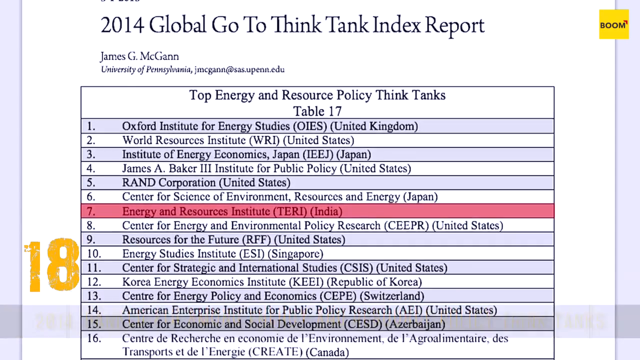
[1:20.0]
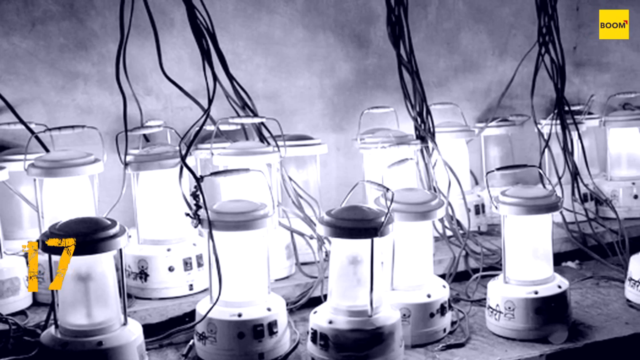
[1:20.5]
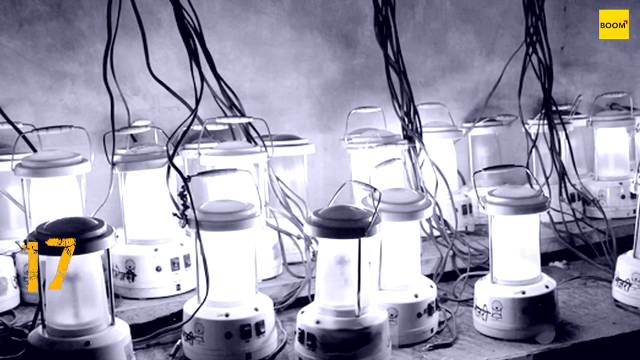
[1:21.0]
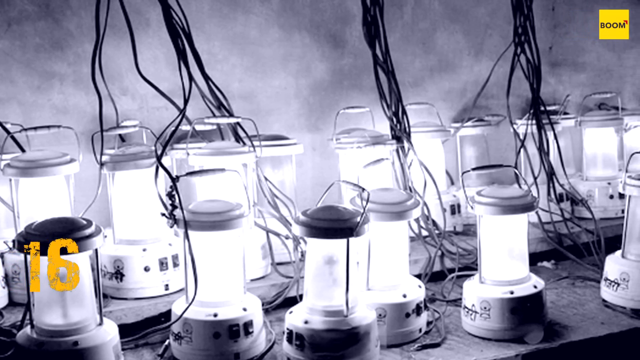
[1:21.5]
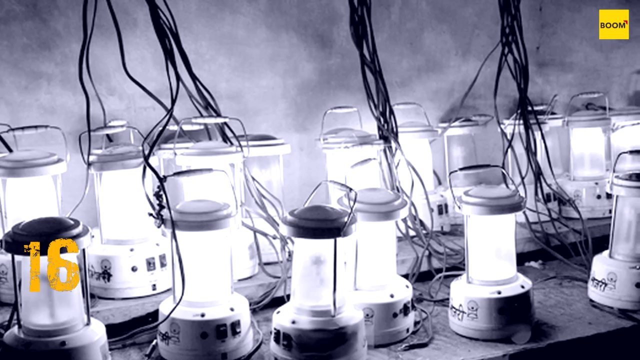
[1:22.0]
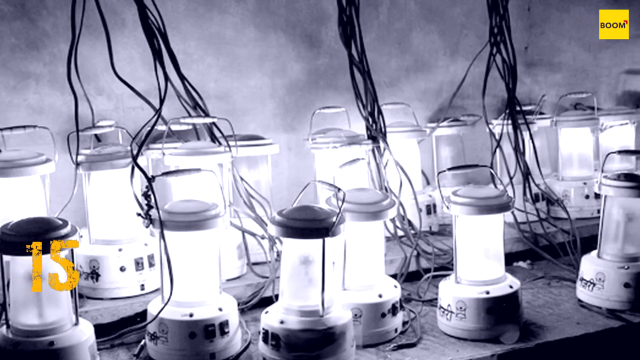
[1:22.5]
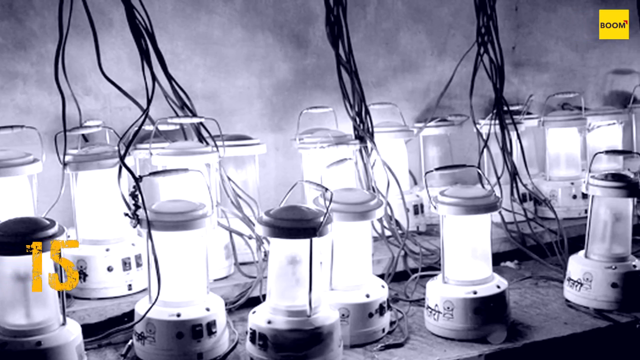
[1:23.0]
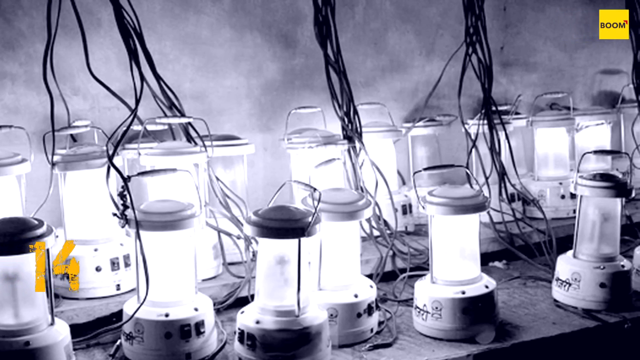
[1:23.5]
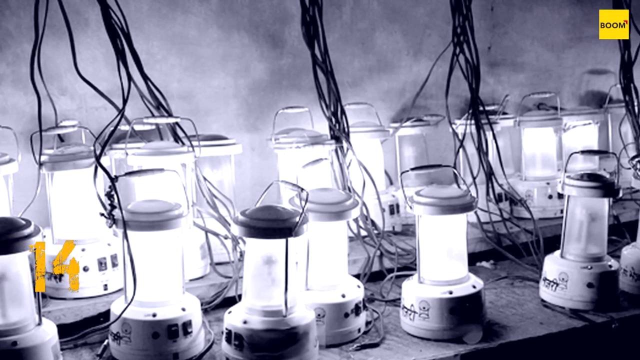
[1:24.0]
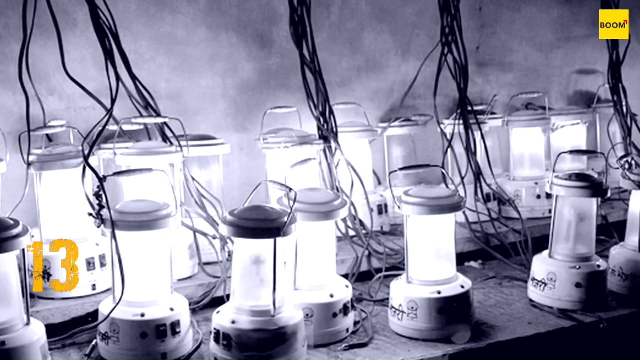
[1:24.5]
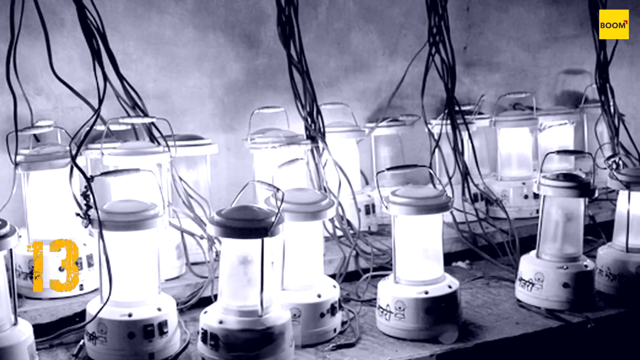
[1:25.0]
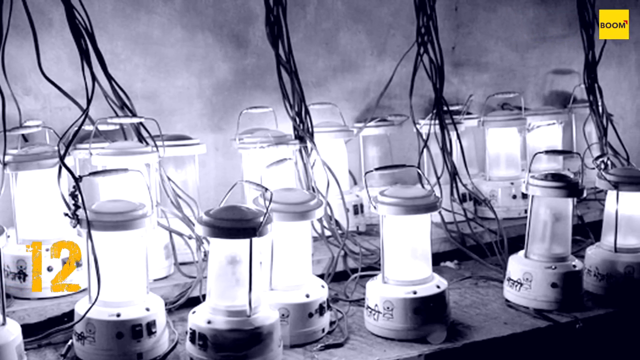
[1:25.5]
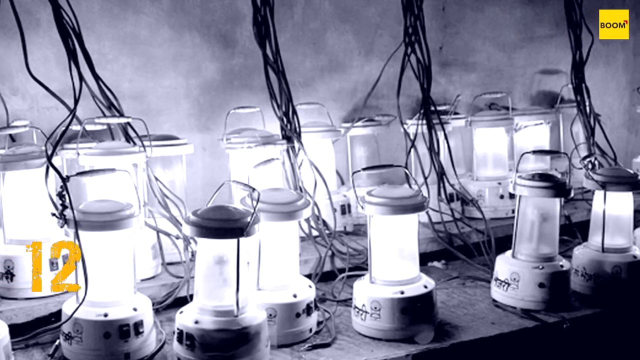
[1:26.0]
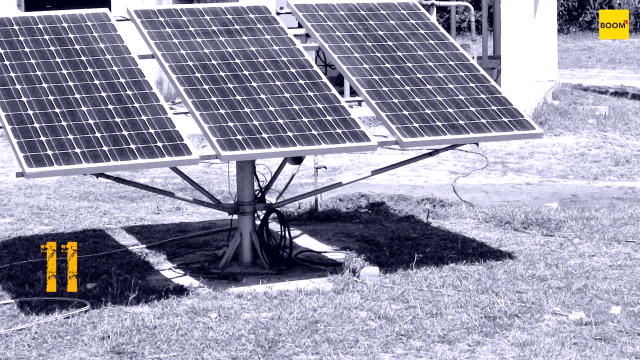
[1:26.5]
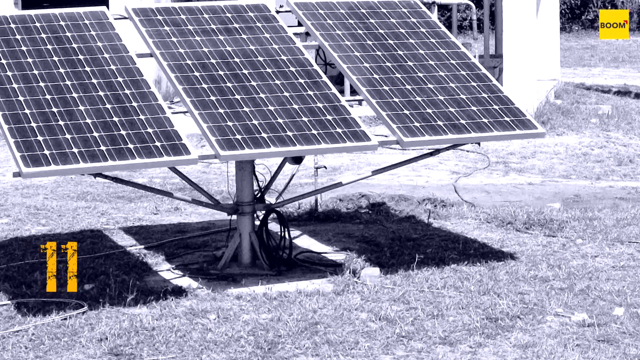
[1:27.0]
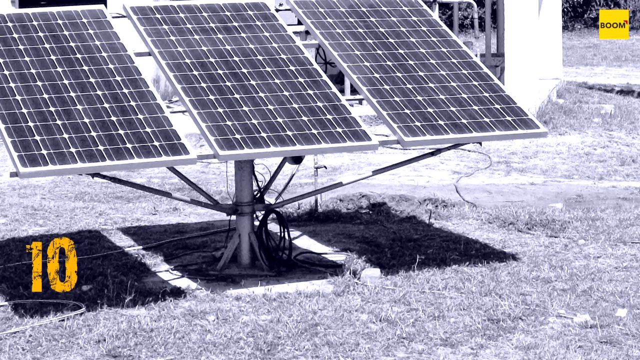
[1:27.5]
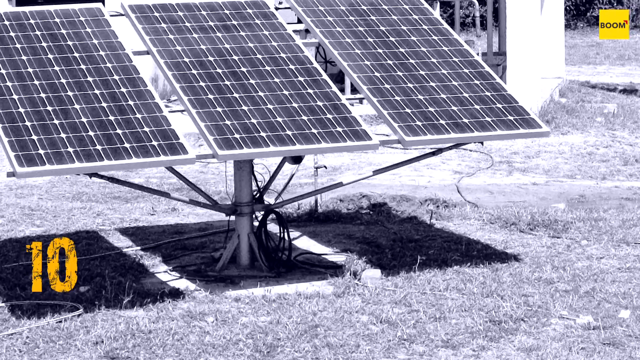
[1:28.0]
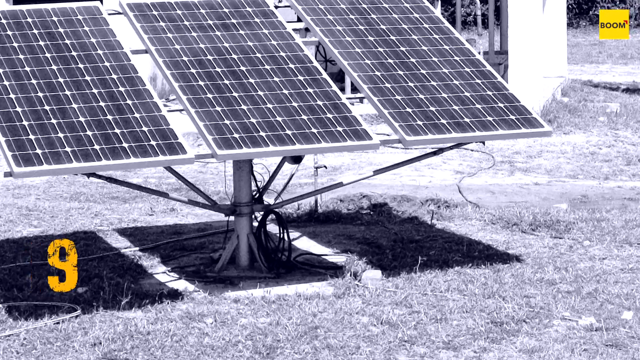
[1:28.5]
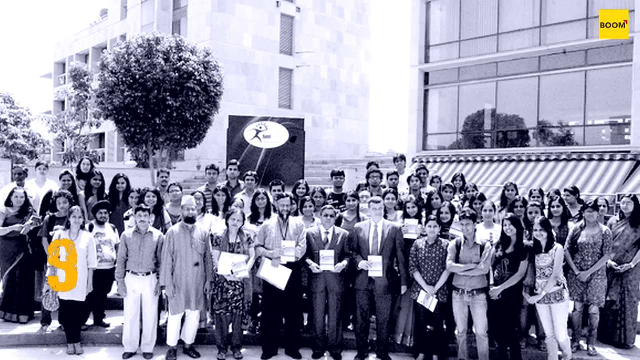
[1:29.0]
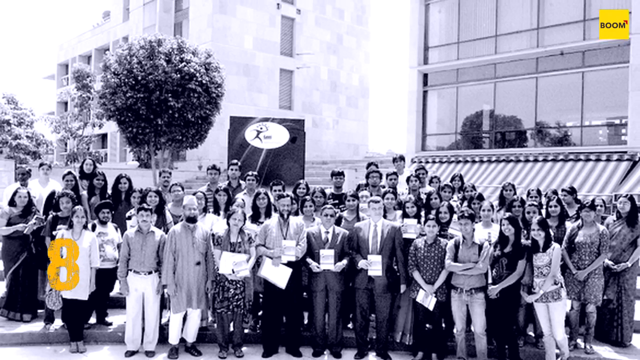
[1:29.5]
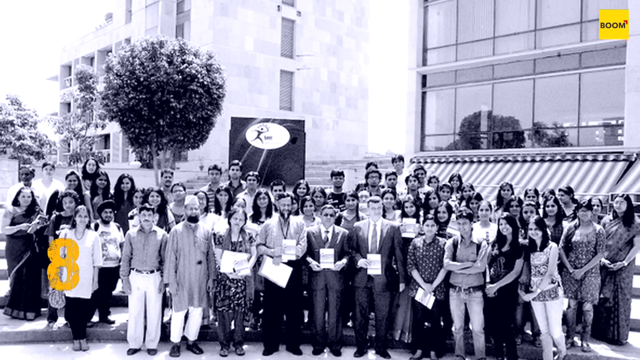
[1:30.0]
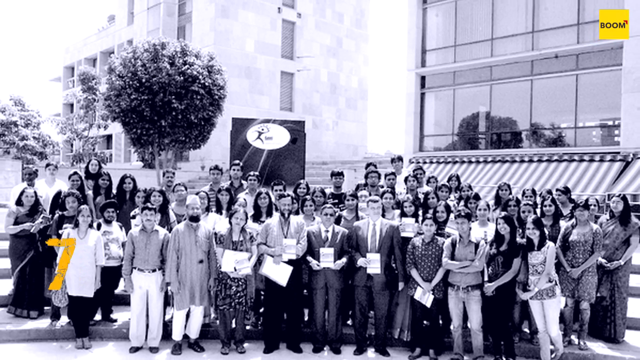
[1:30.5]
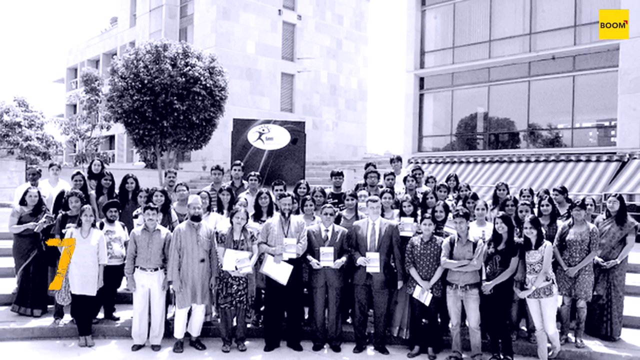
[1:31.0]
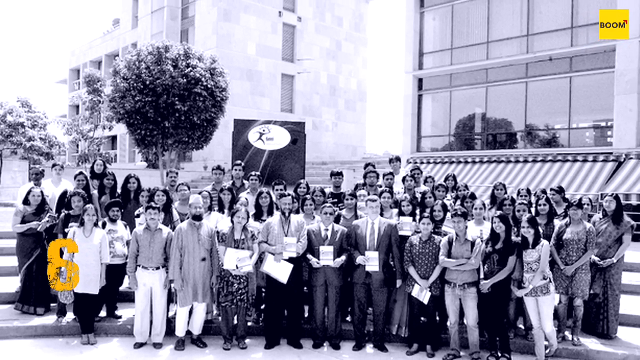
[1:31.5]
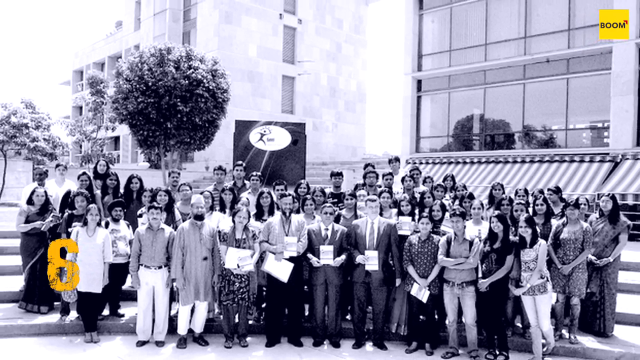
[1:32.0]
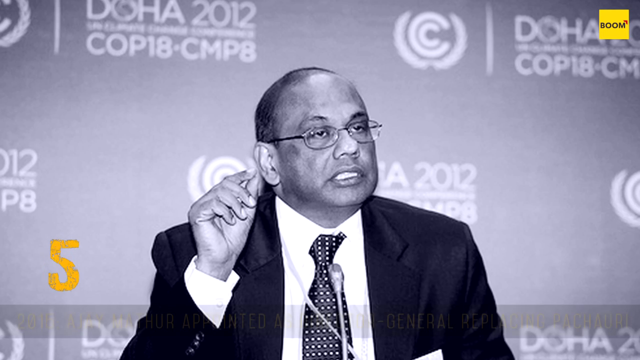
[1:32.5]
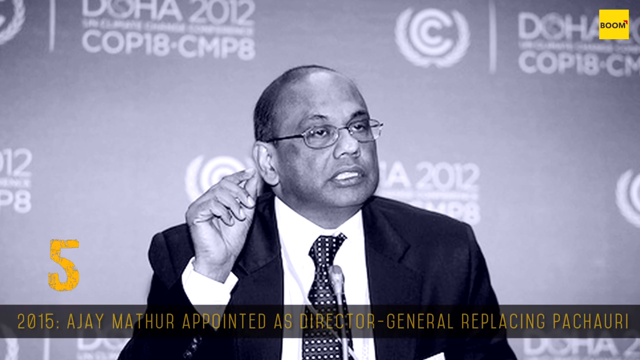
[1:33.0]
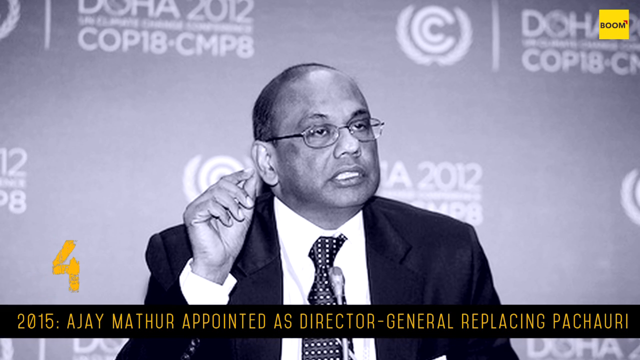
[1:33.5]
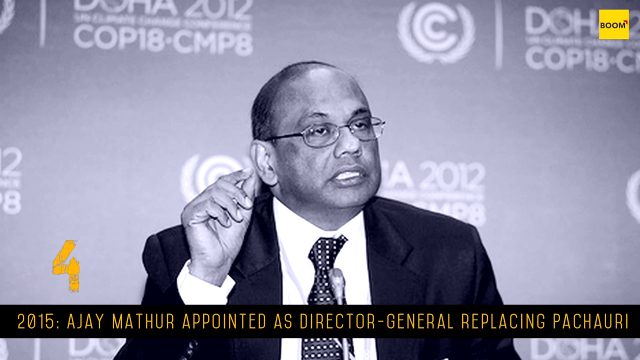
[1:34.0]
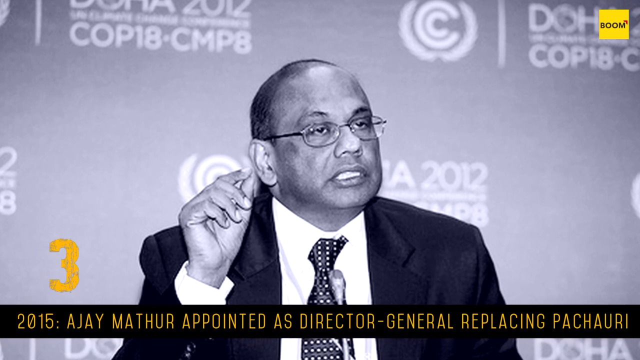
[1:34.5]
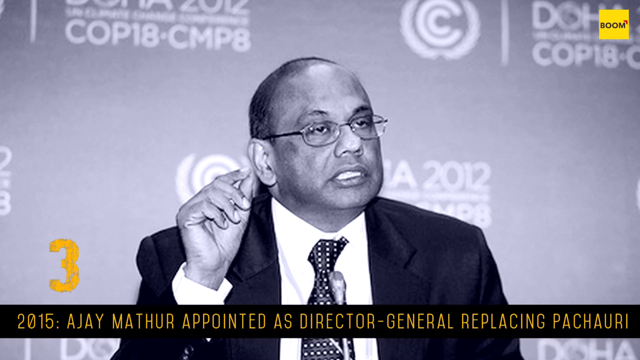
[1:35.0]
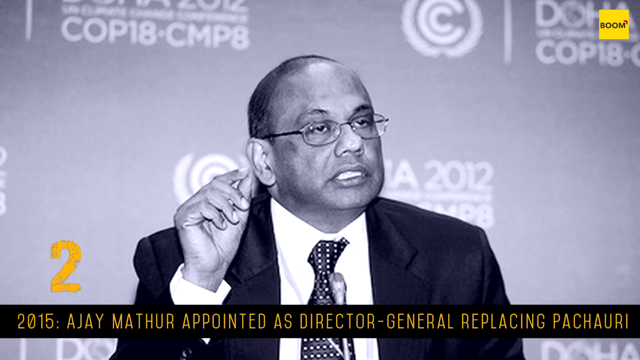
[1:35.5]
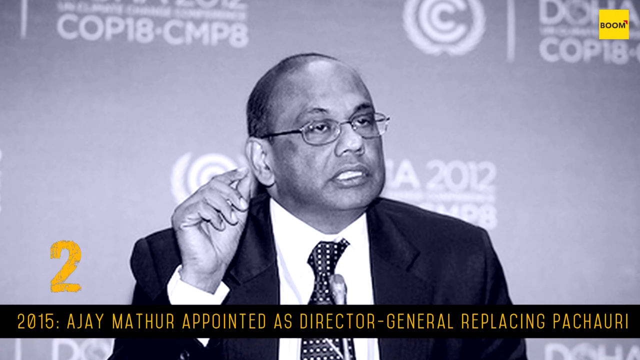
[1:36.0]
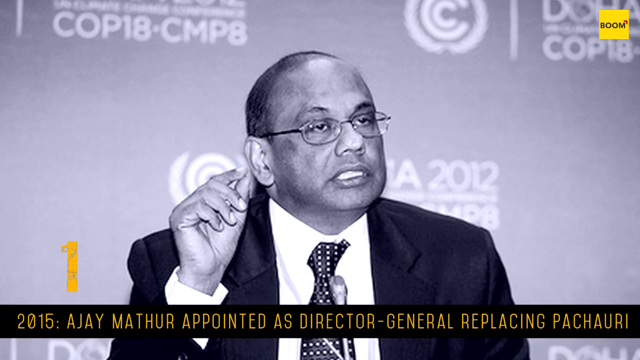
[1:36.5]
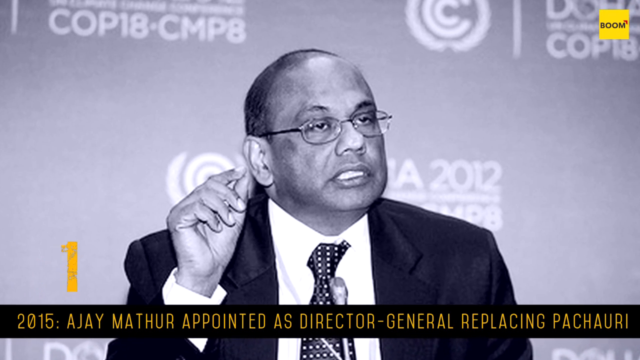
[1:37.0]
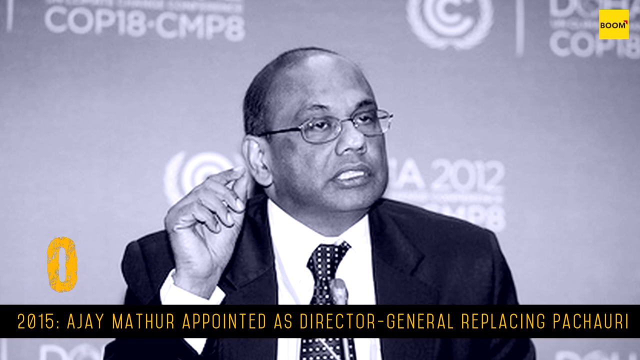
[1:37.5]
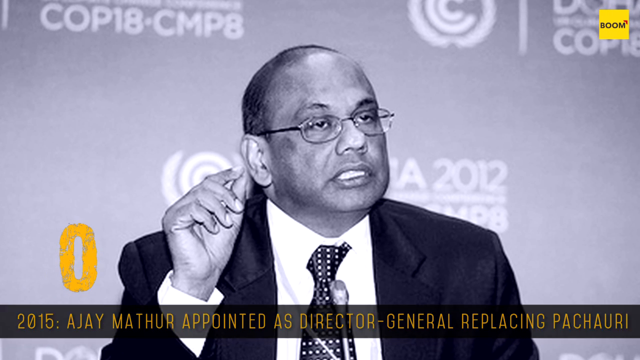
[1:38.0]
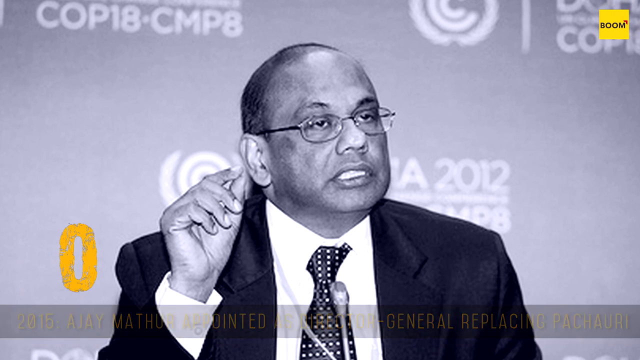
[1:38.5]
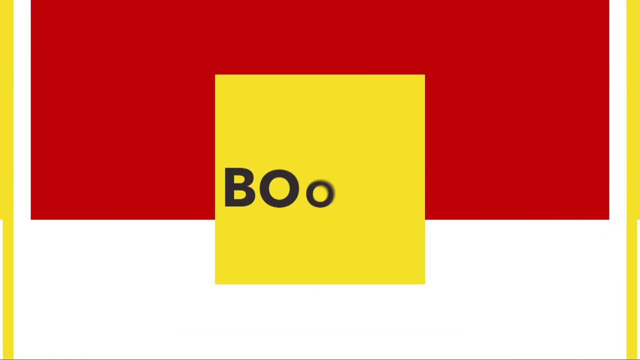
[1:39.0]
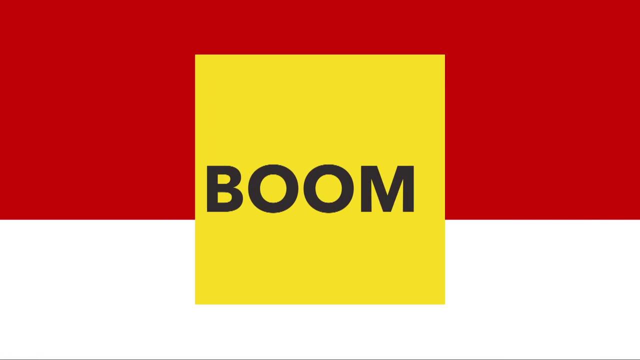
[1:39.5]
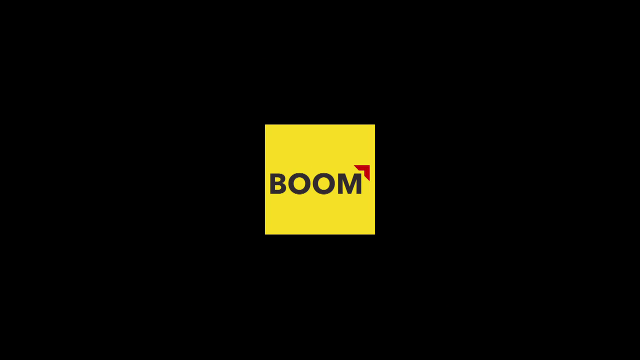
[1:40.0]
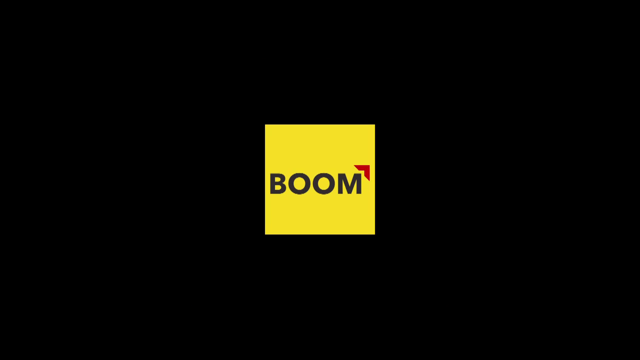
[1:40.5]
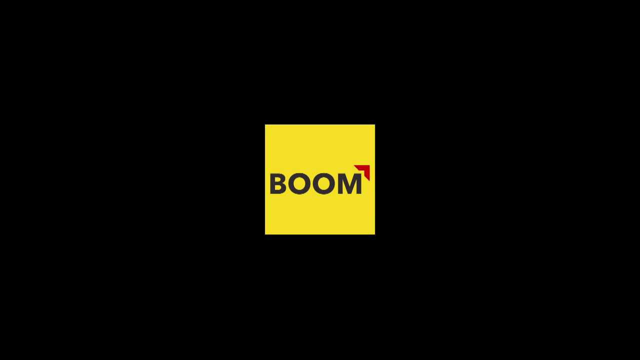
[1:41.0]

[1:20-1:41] Many lamps powered by cables are shown, and the cables point toward what appears to be a solar panel supplying the sun's energy to the lamps. This is made by the Teddy Institute. A picture shows many of the people involved in the Teddy Institute project; they all seem happy, are holding some kind of paper, and are outside the institute. Then a photo of a man appears with text stating that in 2015 Ajay Mathur was appointed Director General, replacing Pachauri as head of the Teddy Institute. The video ends with the Boom logo: the word Boom in a yellow square, with a little red arrow at the end pointing up to the right.